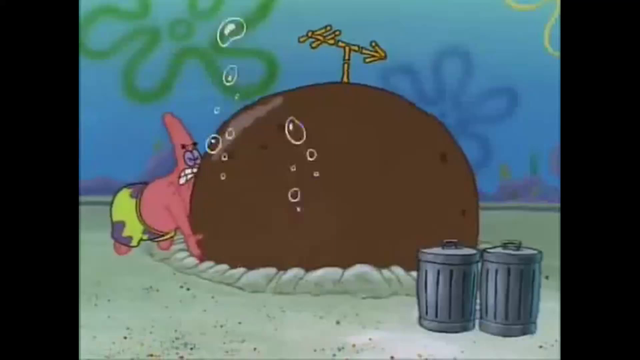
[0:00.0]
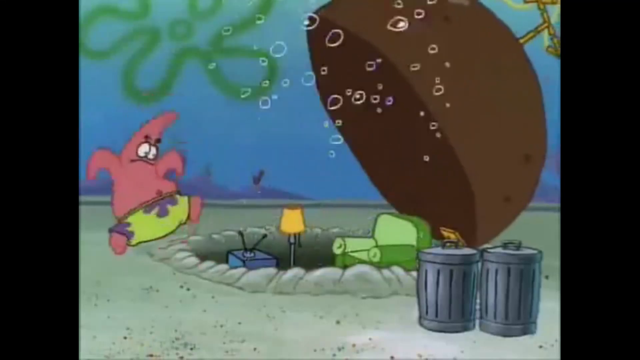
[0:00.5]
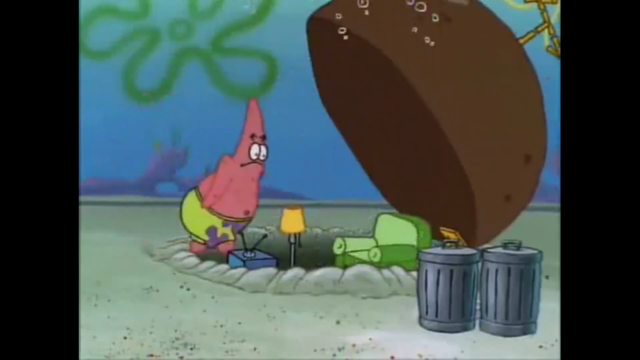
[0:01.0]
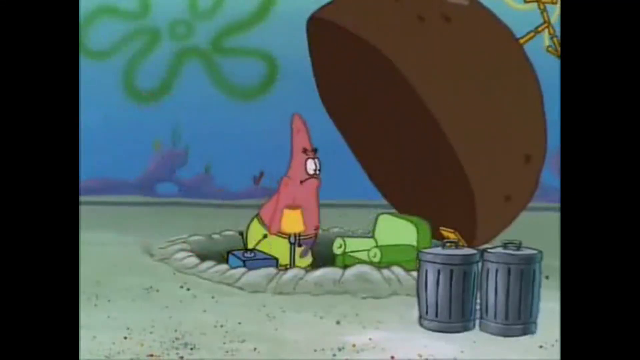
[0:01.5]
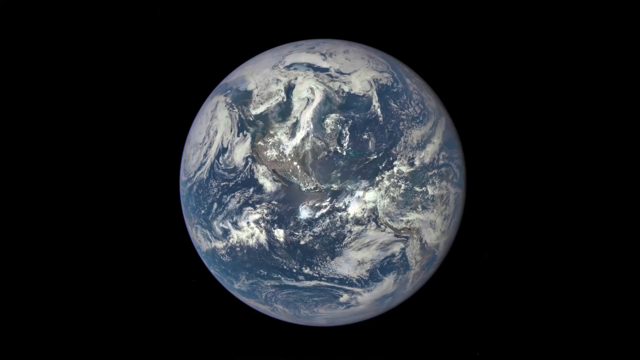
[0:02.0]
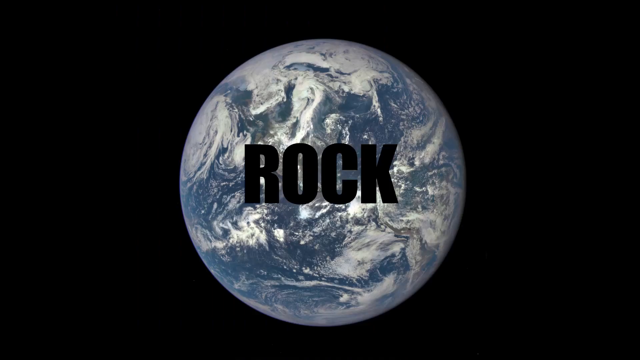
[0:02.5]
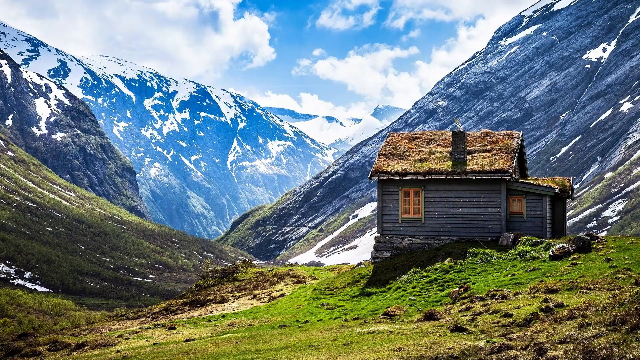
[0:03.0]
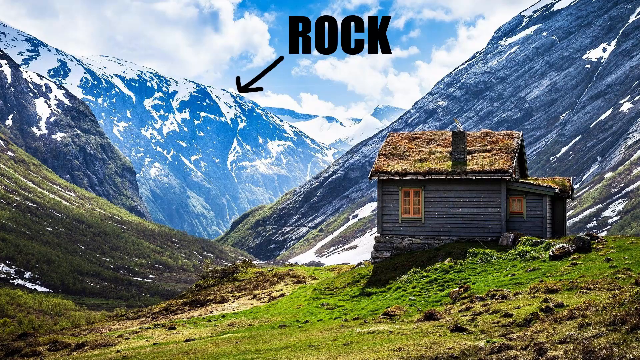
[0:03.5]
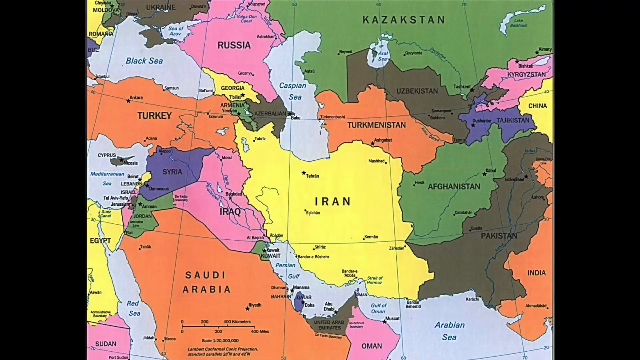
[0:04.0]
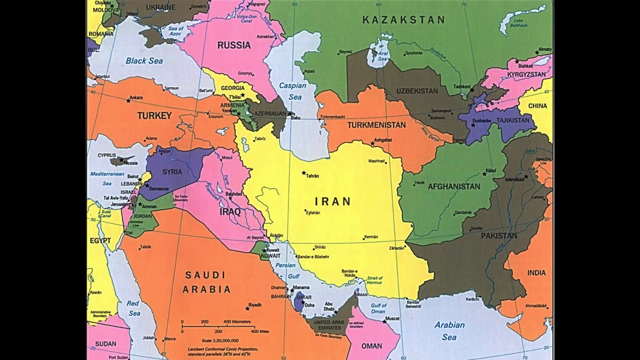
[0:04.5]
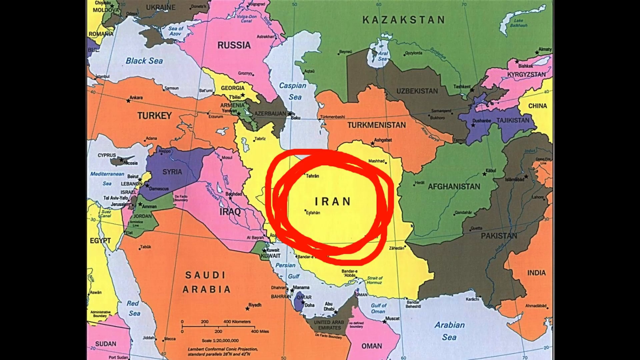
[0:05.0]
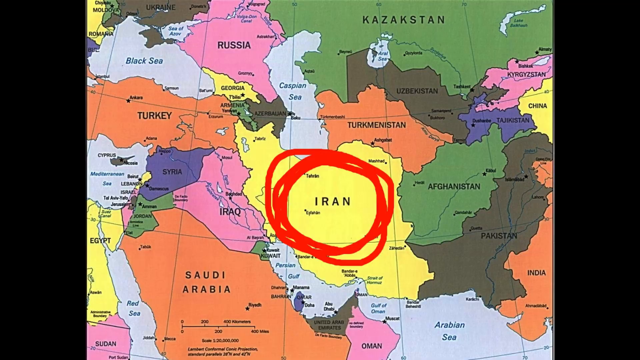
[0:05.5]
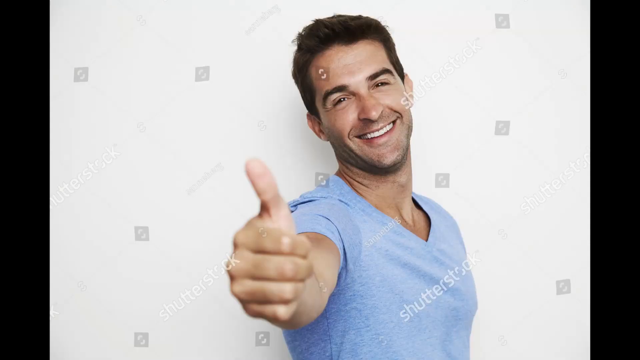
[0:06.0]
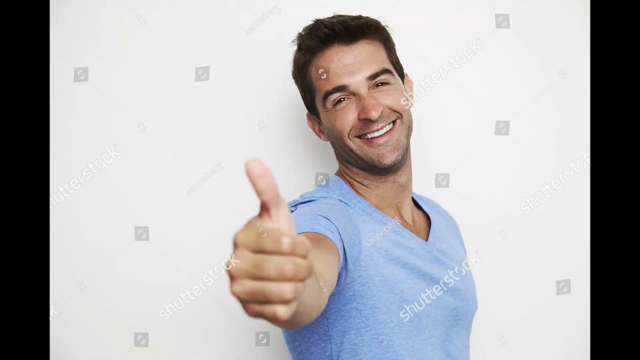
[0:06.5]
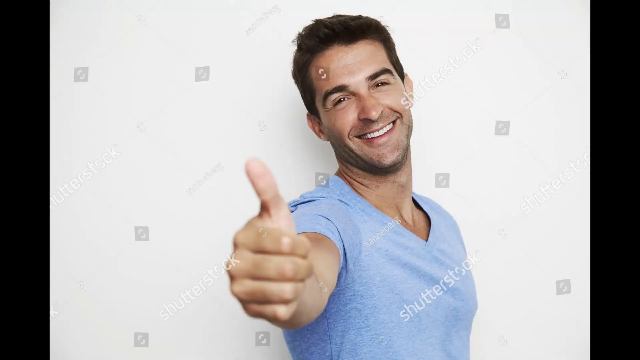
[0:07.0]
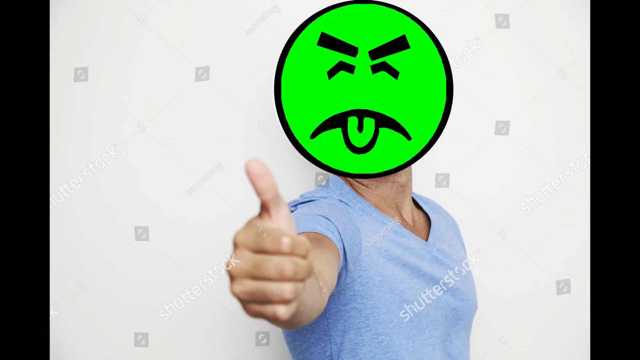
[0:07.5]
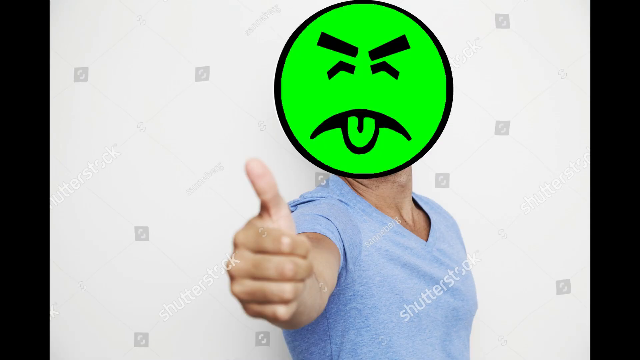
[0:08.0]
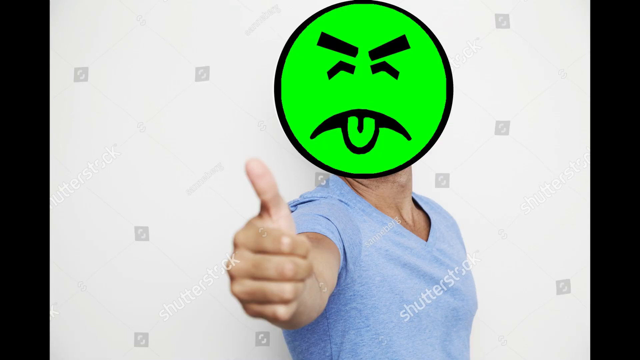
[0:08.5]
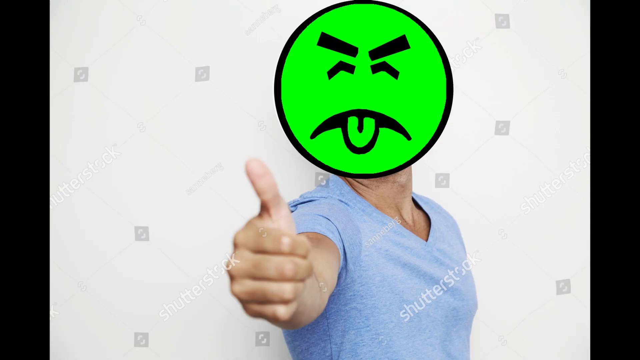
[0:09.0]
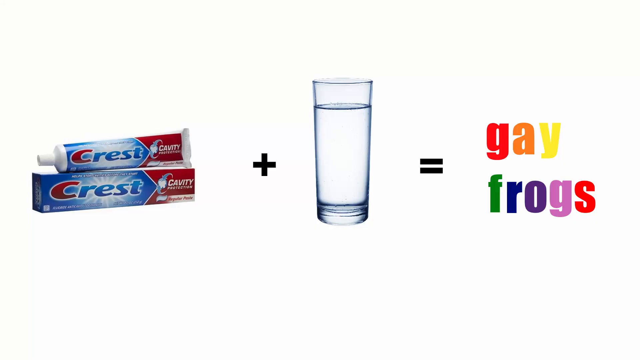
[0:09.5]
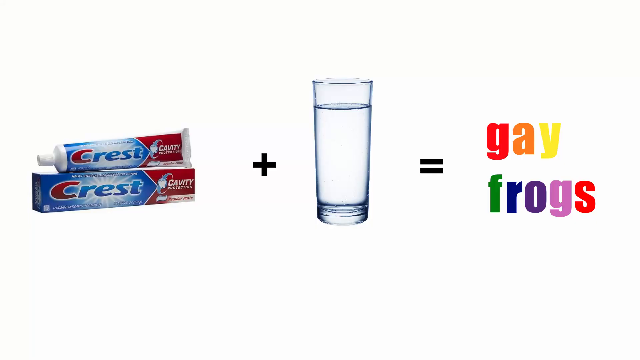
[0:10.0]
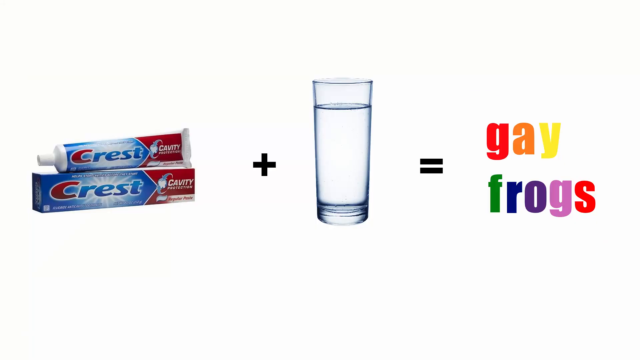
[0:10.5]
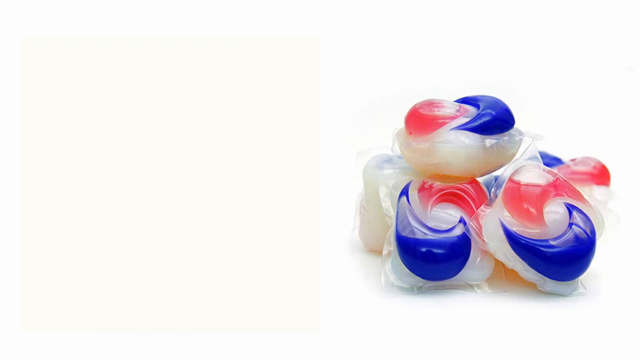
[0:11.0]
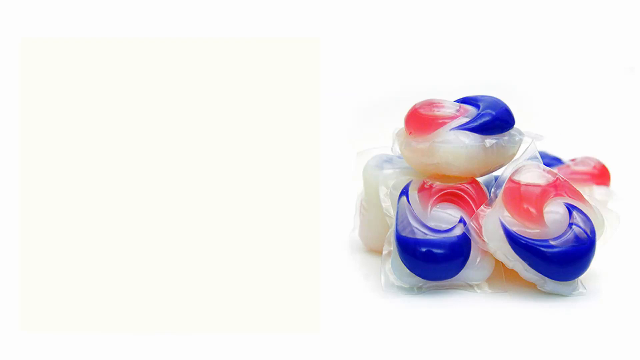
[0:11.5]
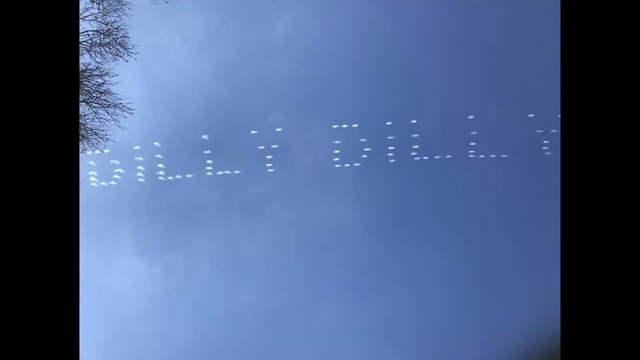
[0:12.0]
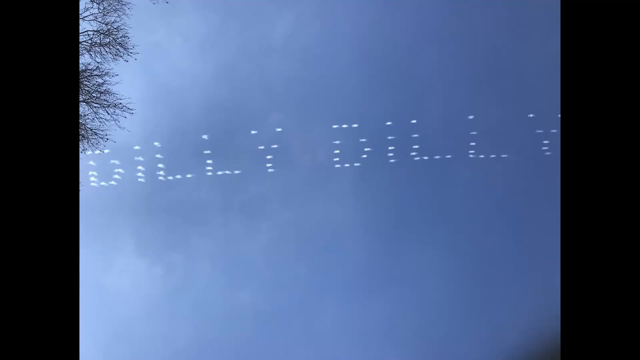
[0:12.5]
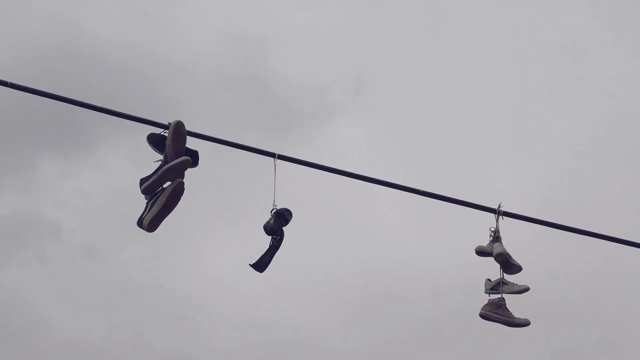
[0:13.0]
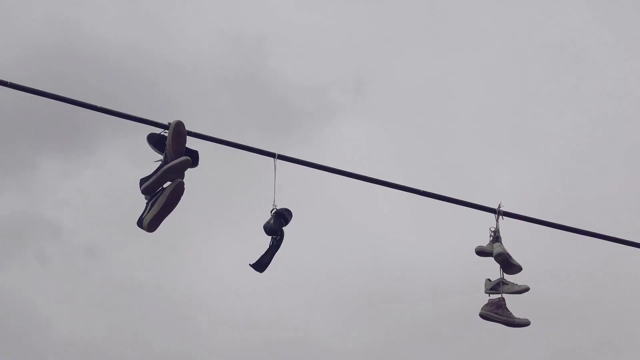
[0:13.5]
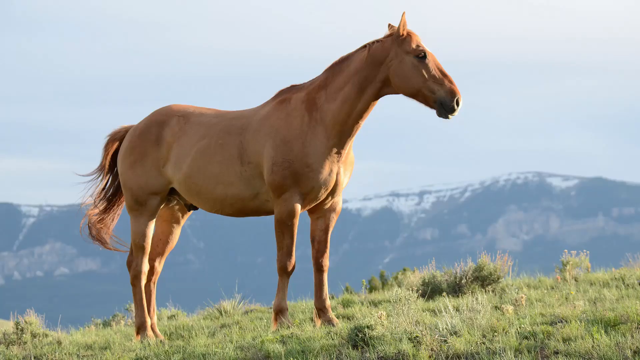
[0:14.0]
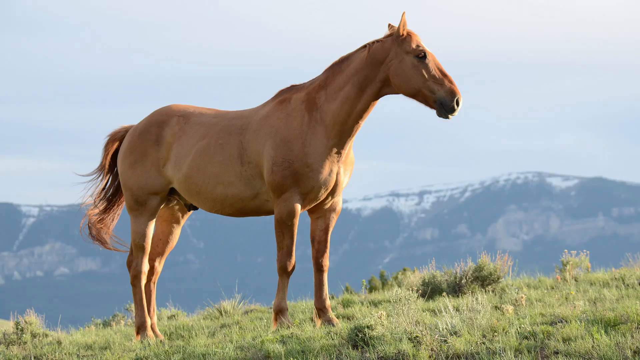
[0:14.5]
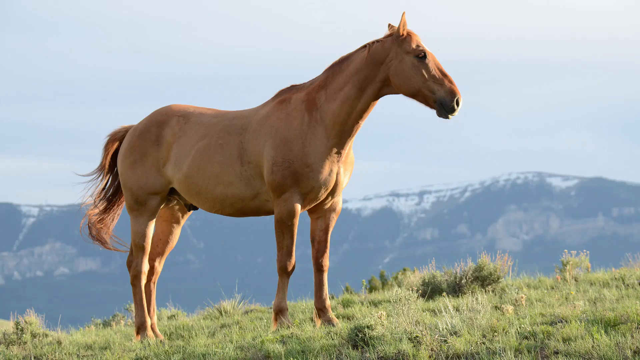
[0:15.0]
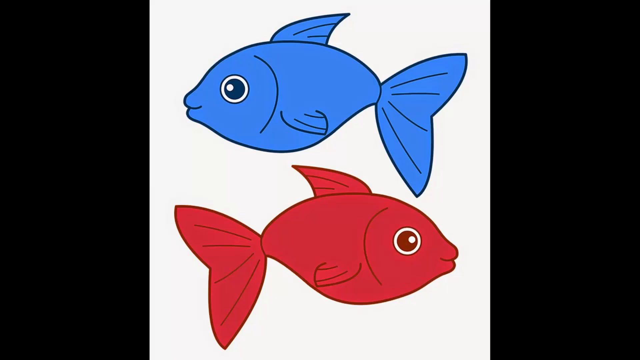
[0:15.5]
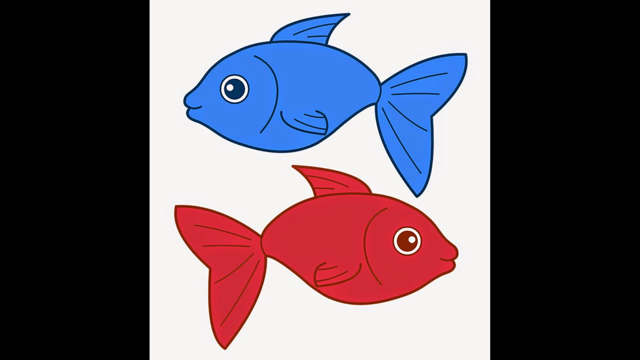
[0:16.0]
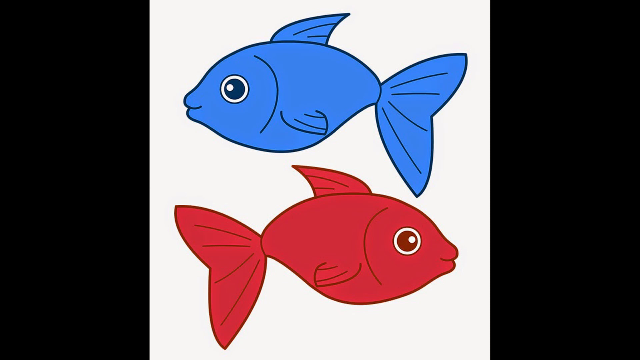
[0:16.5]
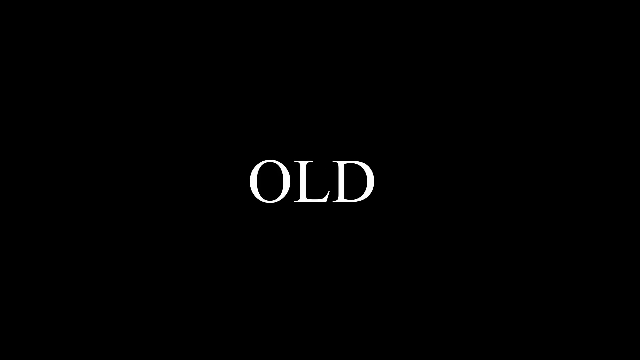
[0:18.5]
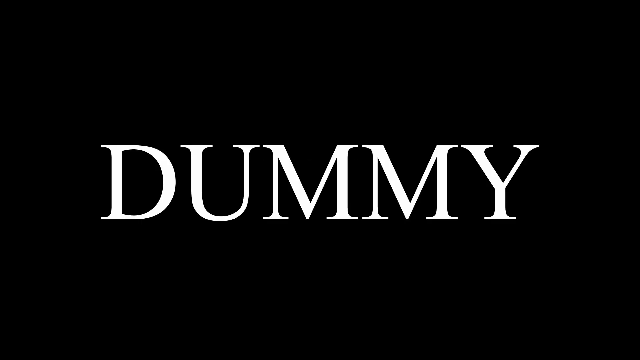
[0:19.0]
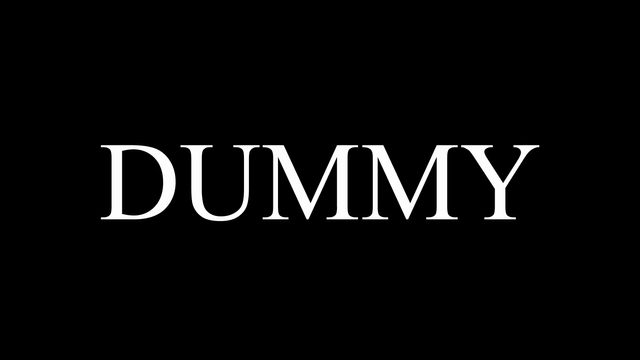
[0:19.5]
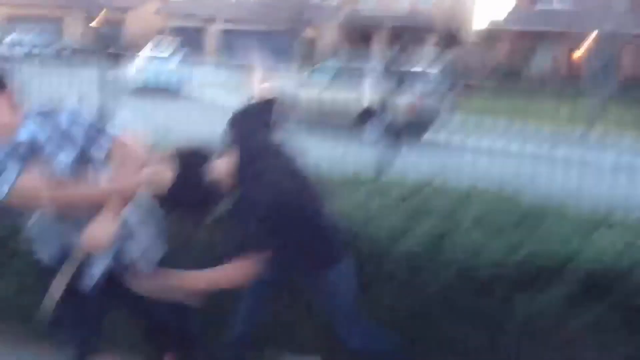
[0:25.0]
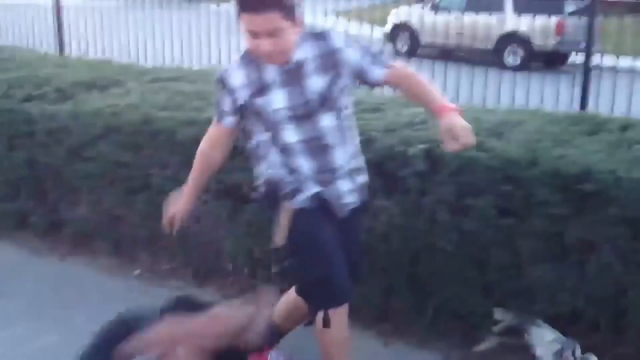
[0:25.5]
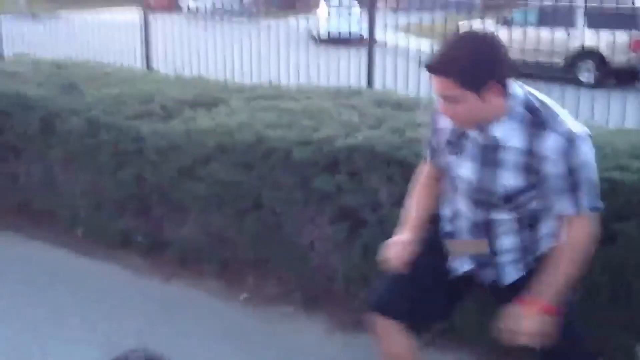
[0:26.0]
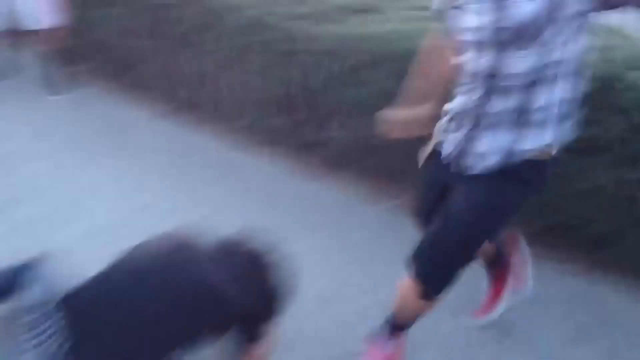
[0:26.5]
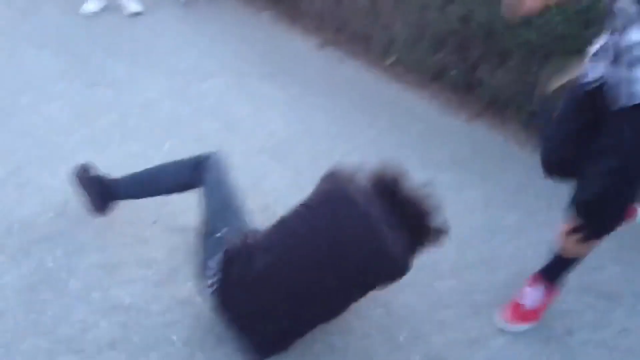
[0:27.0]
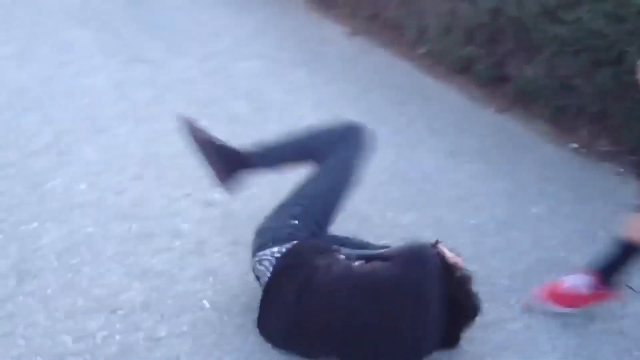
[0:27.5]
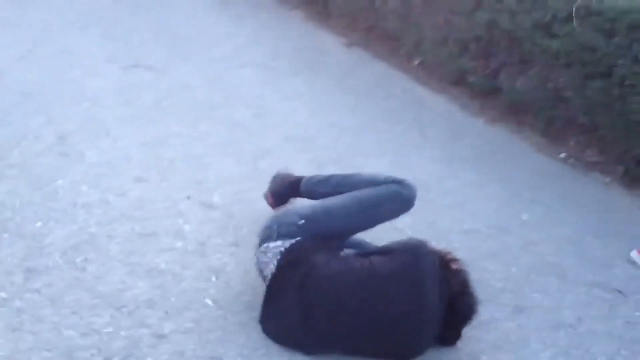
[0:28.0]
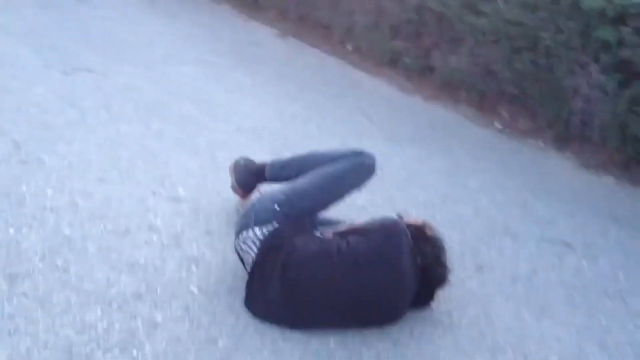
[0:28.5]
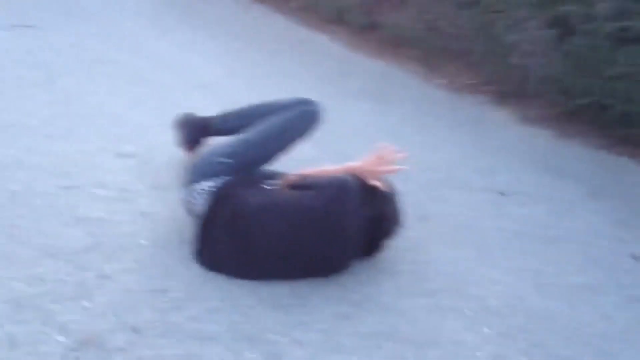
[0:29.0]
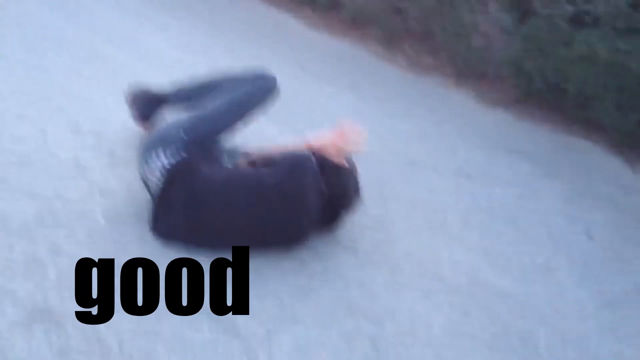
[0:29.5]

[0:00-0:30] A SpongeBob SquarePants cartoon plays, in which a pink cartoon character is lifting up a brown house, trying to lift it so they can get in. Two garbage bins are outside the house. Next, the Earth and the nature of the world are shown, followed by a map showing Russia, Turkey, Iran circled in red, Saudi Arabia and the Arabian Sea. A man points his finger and lifts his fifth finger, and a green emoji appears. A made-up word is shown, combining grass and water, meaning gay frogs. Some blue and red thing appears inside something, and at the top of the sky there are tight laces on top of electrical ropes, along with a brown horse and red and blue fishes. A man fights another man and picks him up, and text reads "good stuff". The content appears to be comedy.